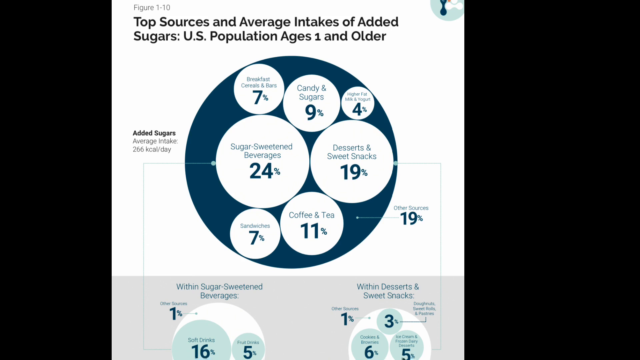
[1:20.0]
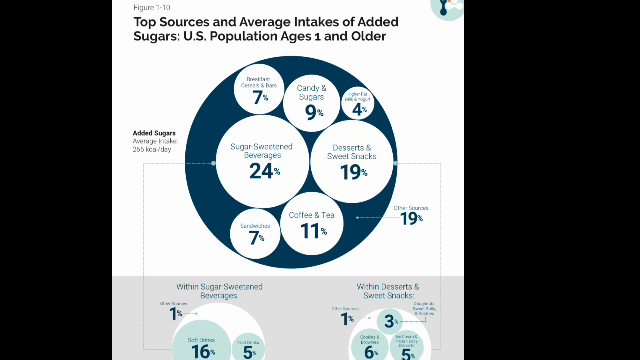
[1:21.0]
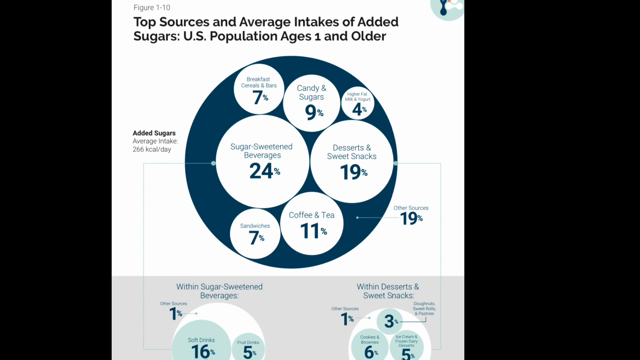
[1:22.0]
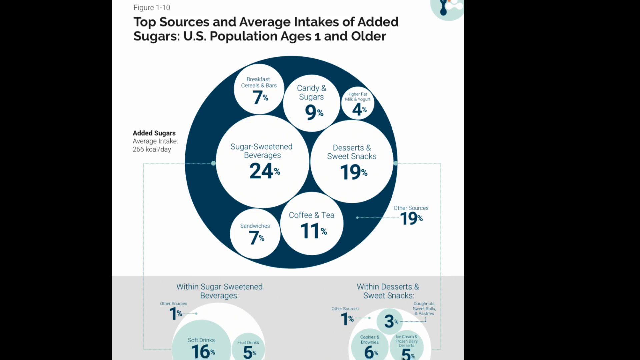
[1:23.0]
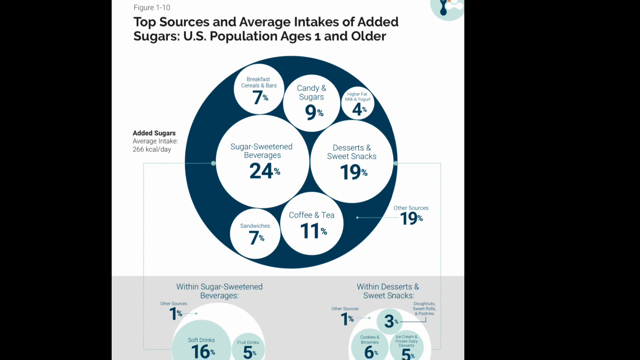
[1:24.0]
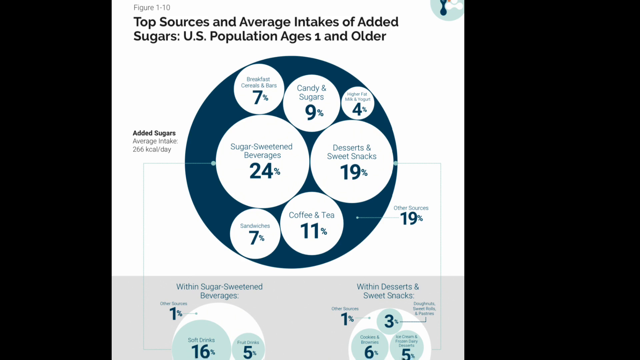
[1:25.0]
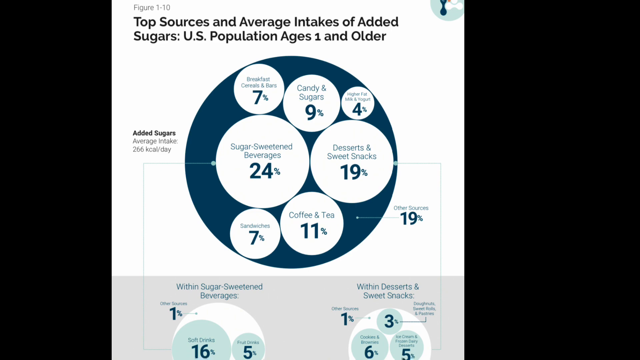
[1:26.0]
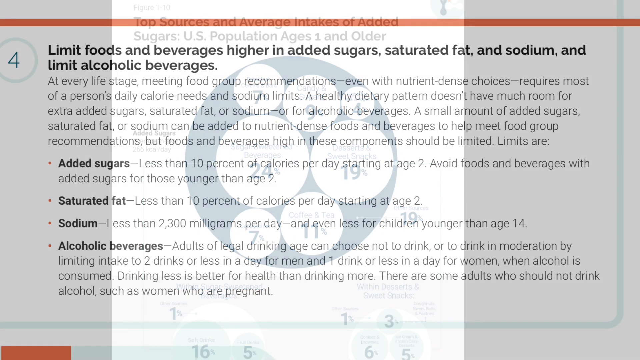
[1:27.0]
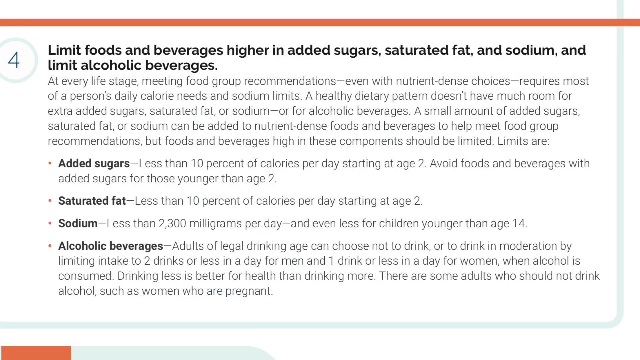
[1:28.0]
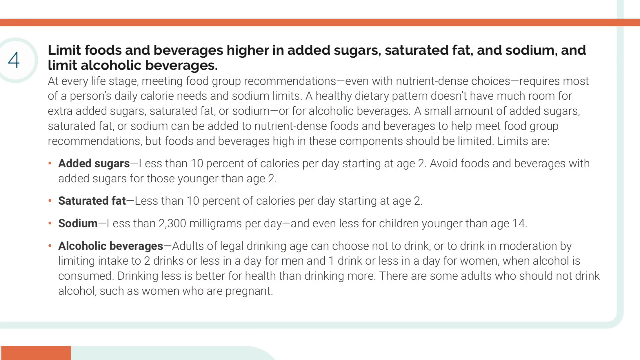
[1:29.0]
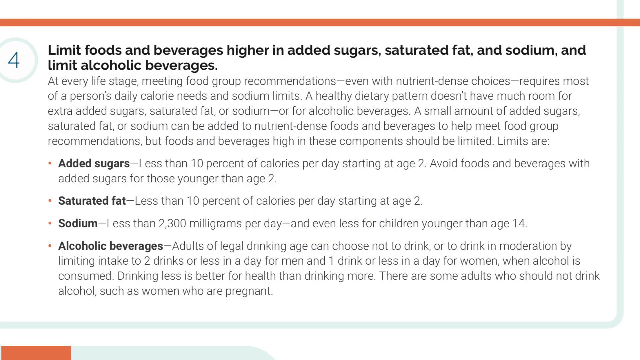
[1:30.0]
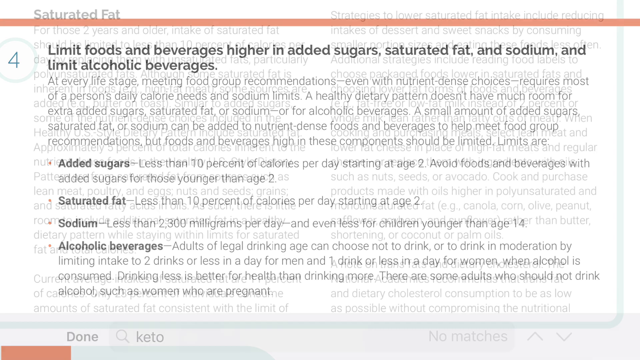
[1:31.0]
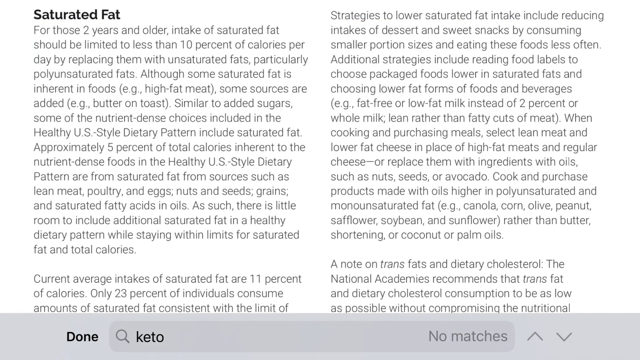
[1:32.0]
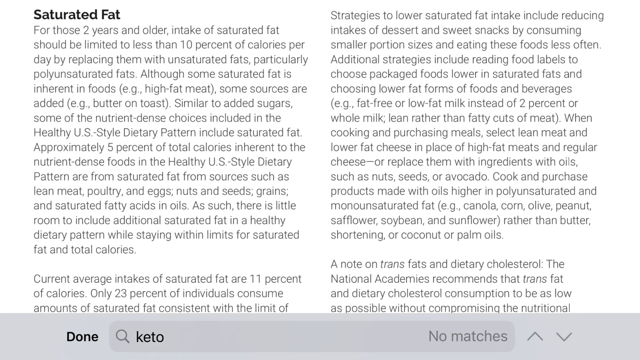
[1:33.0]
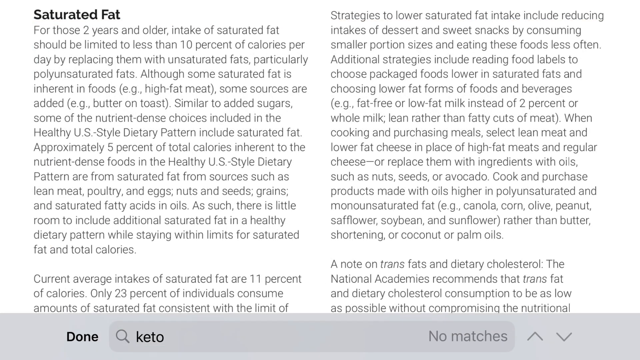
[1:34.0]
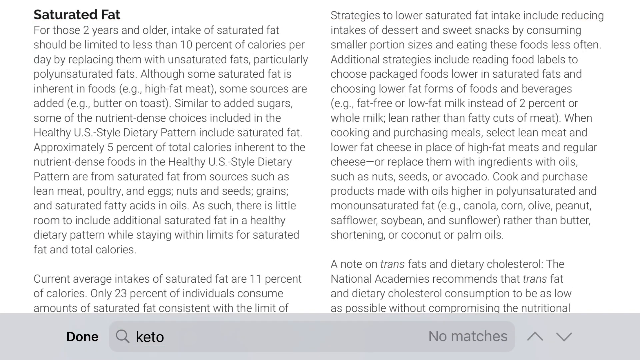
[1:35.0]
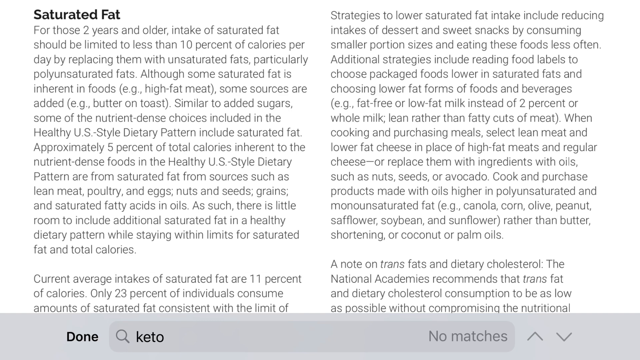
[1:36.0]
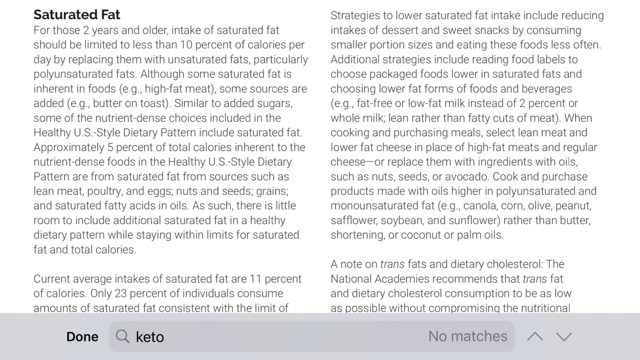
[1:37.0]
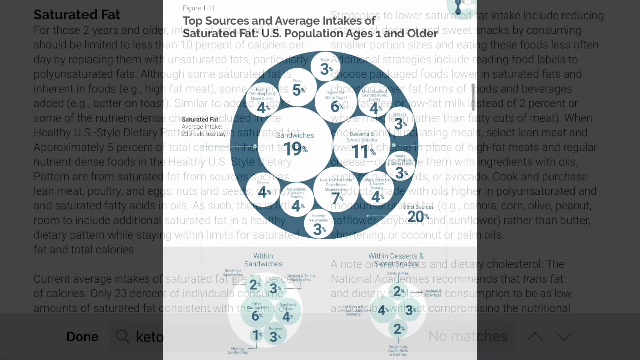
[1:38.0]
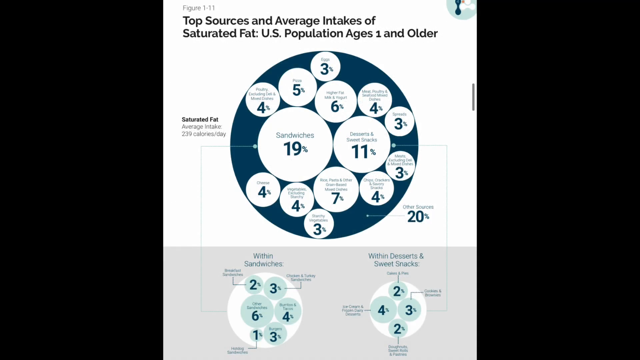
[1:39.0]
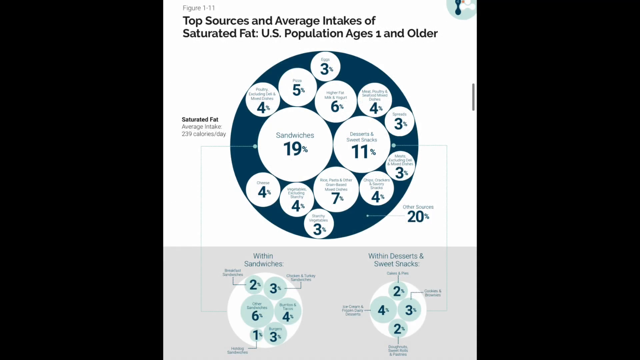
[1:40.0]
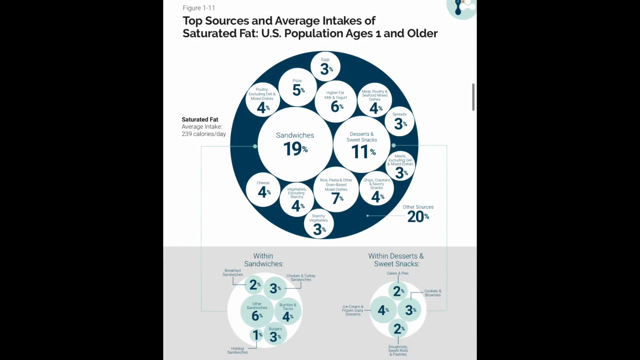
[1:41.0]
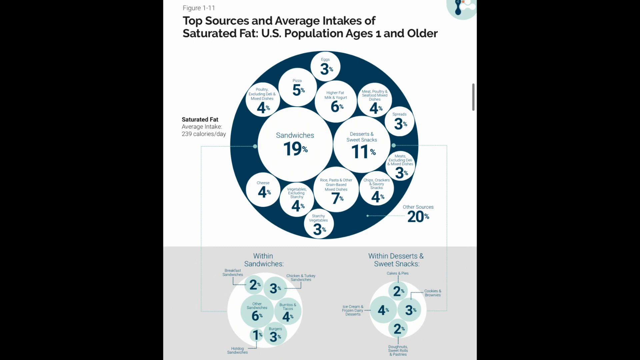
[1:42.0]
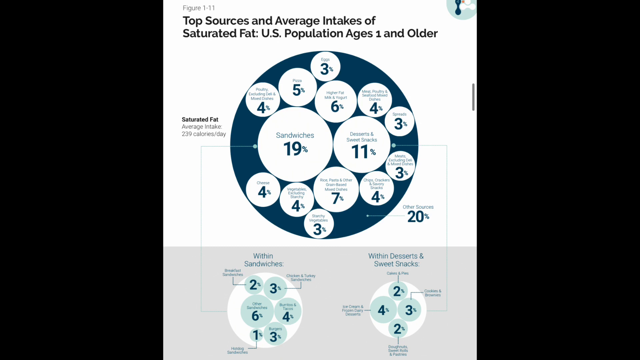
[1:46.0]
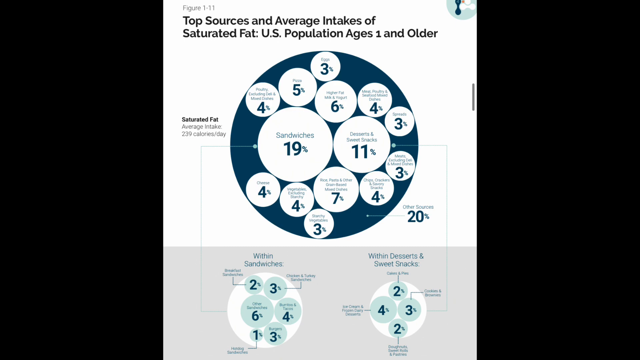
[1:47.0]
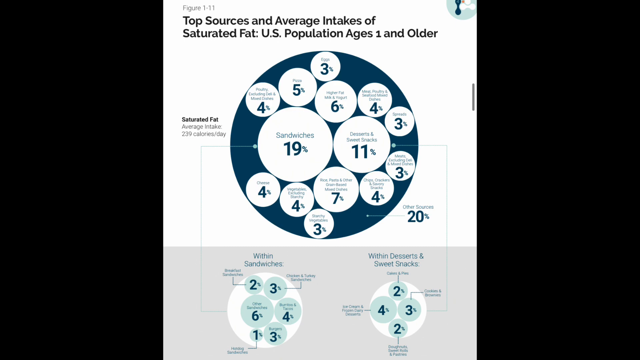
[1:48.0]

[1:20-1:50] A circle graph shows the top sources of average intakes of added sugars in the U.S. population ages 1 and older, with 7 circles within a larger circle; the largest shows sugar-sweetened beverages at 24%. Next, a page states to limit food and beverages higher in added sugar, saturated fat and sodium, and to limit alcoholic beverages. It says added sugars should be less than 10% of calories per day starting at age 2, saturated fat less than 10% of calories per day starting at age 2, and sodium less than 2300 milligrams per day, even less for children younger than age 14. For alcoholic beverages, adults of legal age can choose not to drink or to drink in moderation by limiting intake to two drinks or less in a day for men and one drink or less a day for women. Several paragraphs about saturated fat follow. The shot ends with a second circle graph, a large circle with 14 smaller circles inside it, showing sources of average intake of saturated fat for the U.S. population ages 1 and older, where sandwiches have the largest percentage at 19%. Below it are two smaller circle graphs, each with four or five circles in them, too small to read.